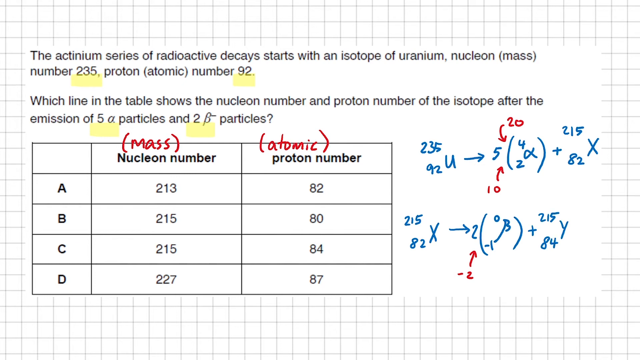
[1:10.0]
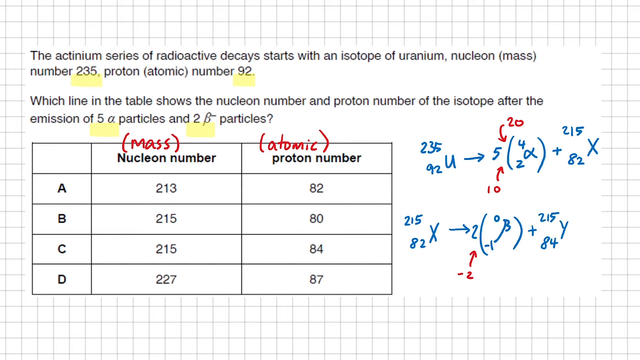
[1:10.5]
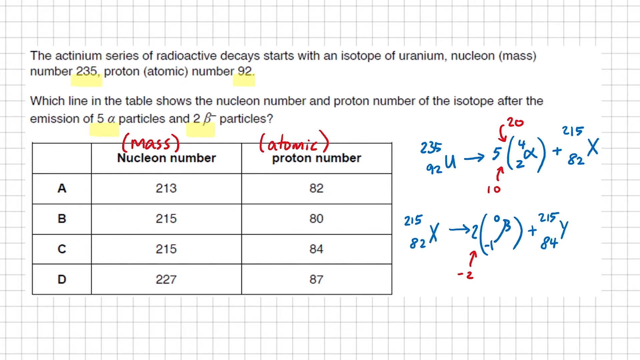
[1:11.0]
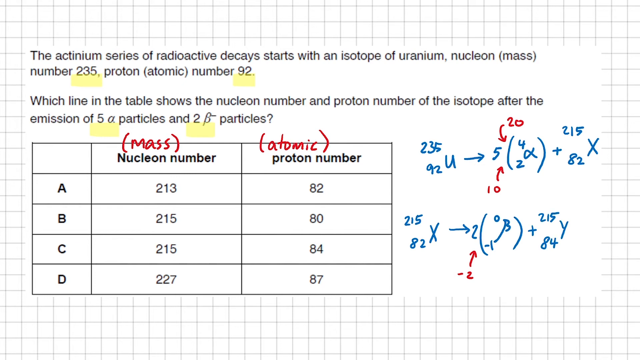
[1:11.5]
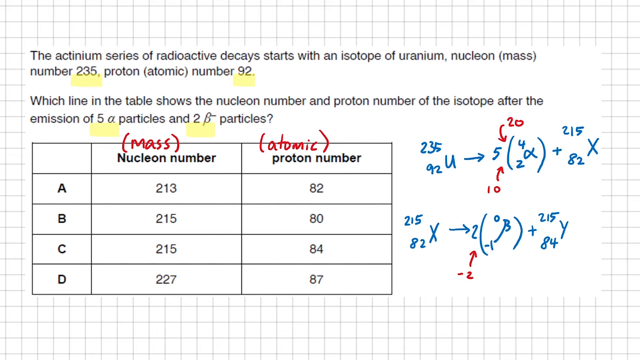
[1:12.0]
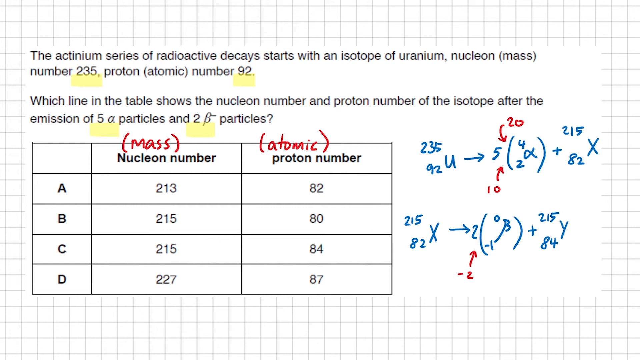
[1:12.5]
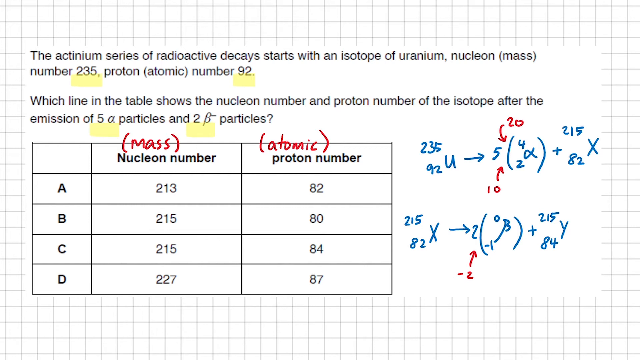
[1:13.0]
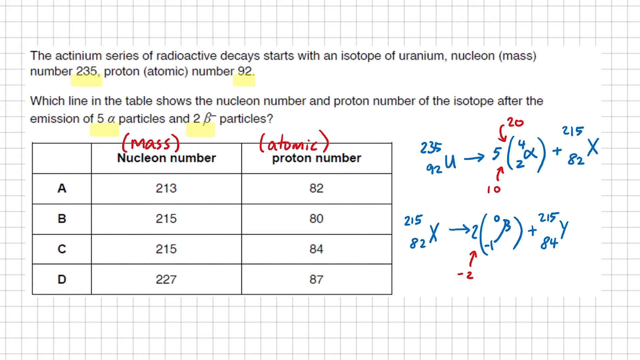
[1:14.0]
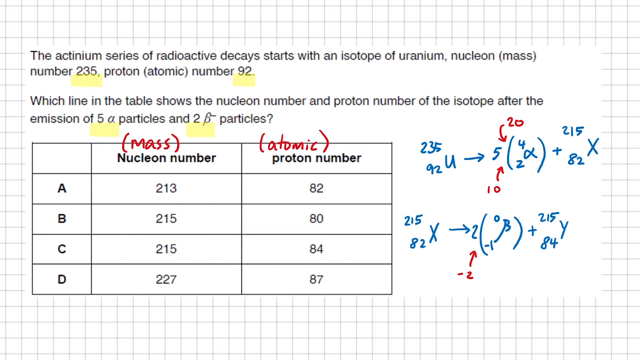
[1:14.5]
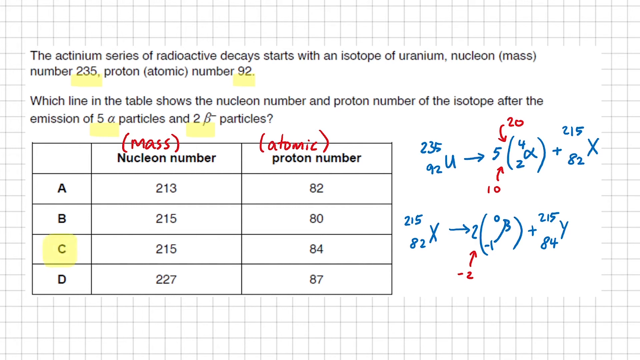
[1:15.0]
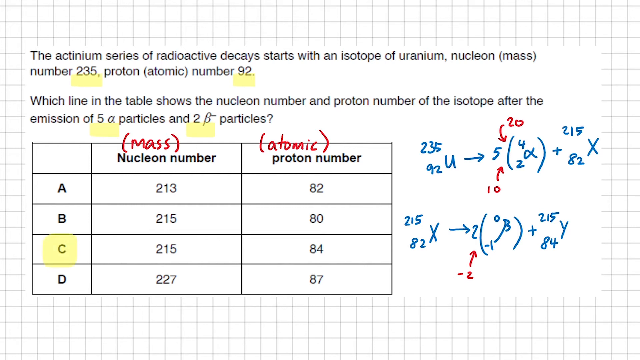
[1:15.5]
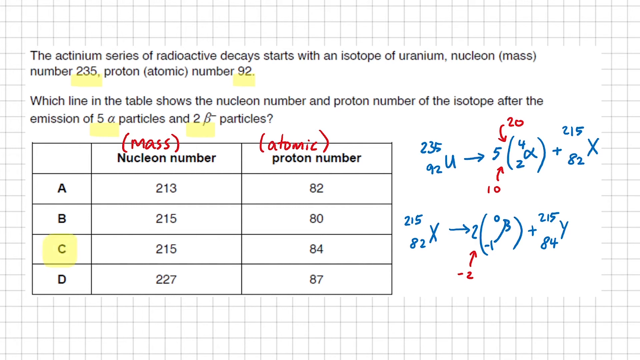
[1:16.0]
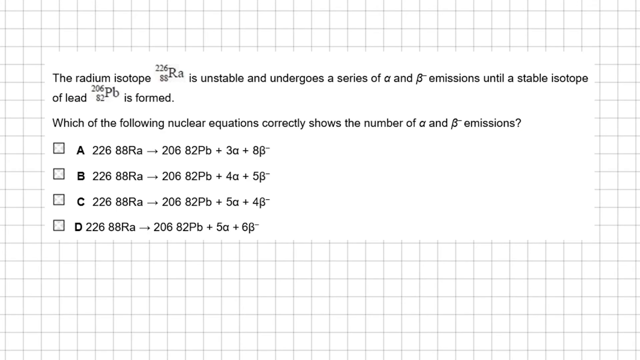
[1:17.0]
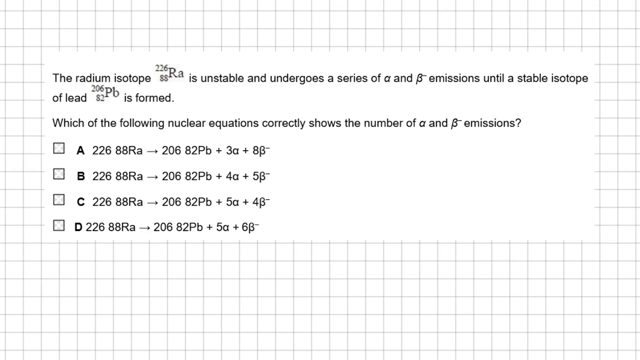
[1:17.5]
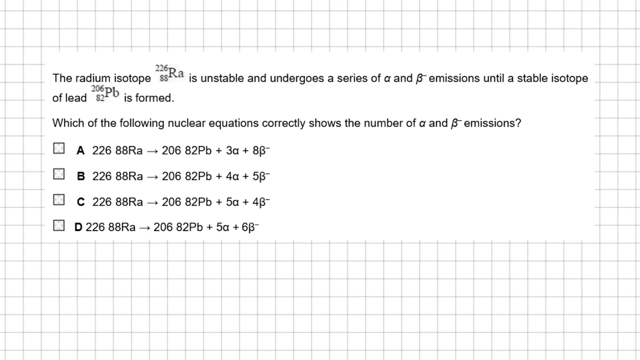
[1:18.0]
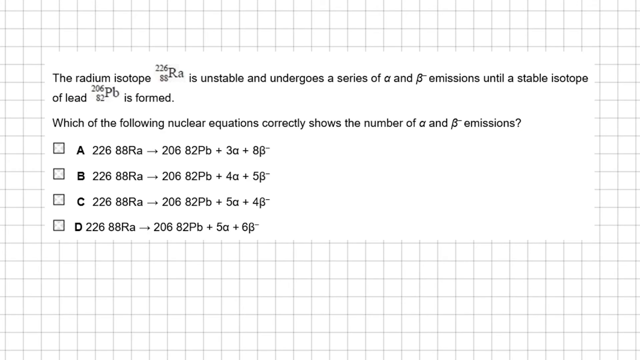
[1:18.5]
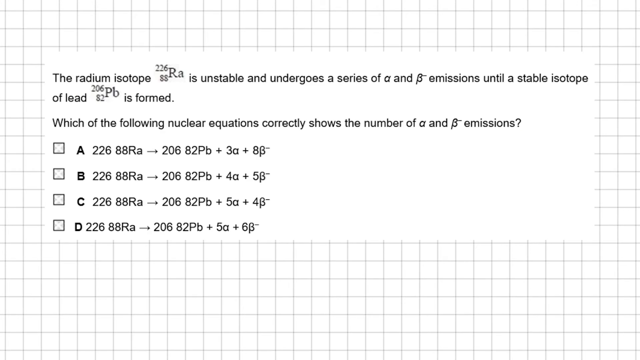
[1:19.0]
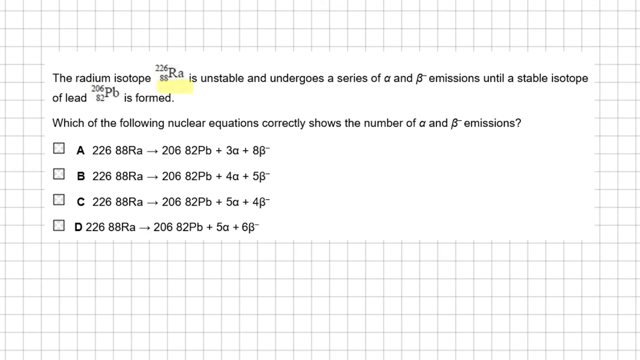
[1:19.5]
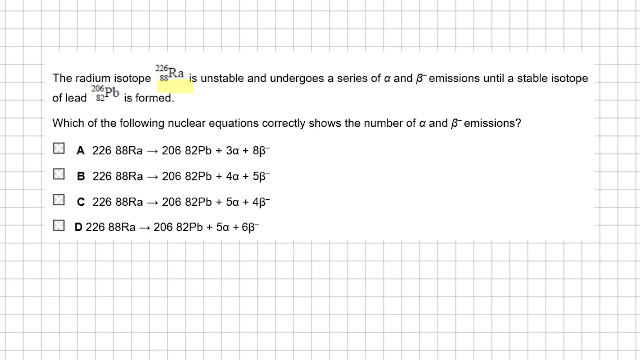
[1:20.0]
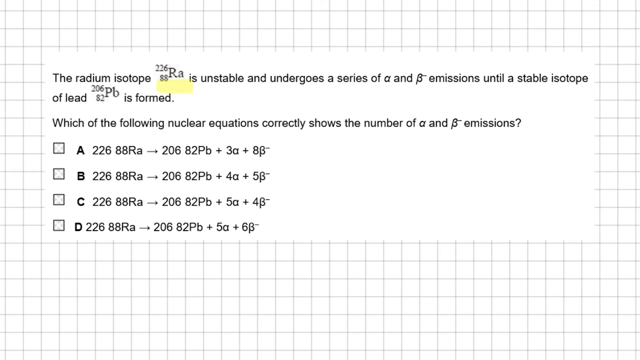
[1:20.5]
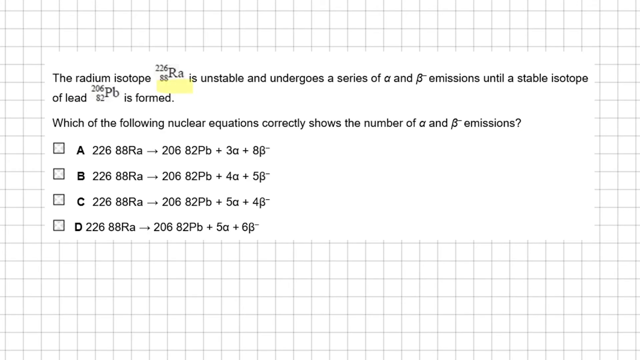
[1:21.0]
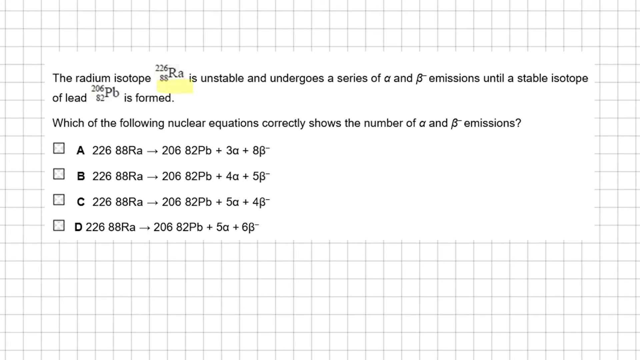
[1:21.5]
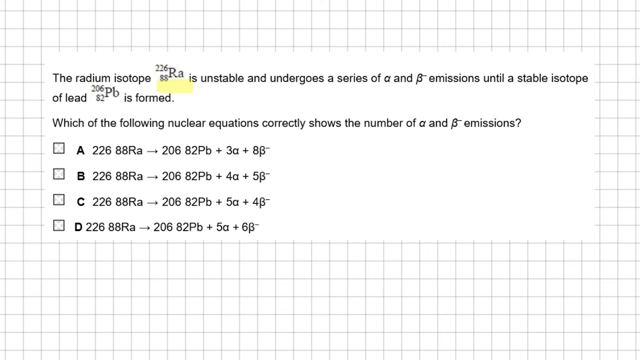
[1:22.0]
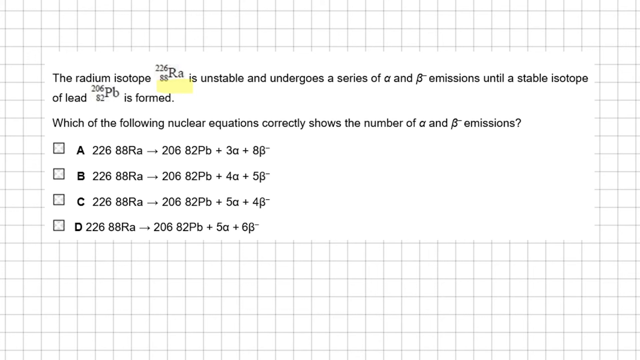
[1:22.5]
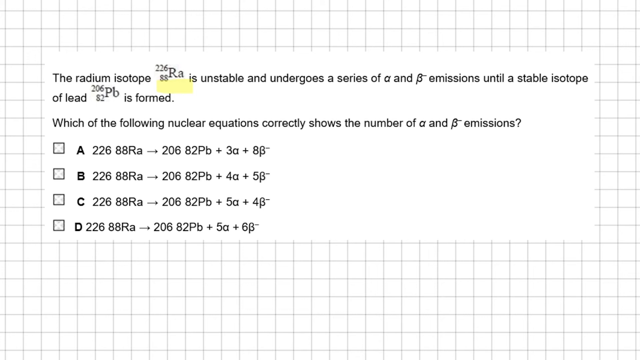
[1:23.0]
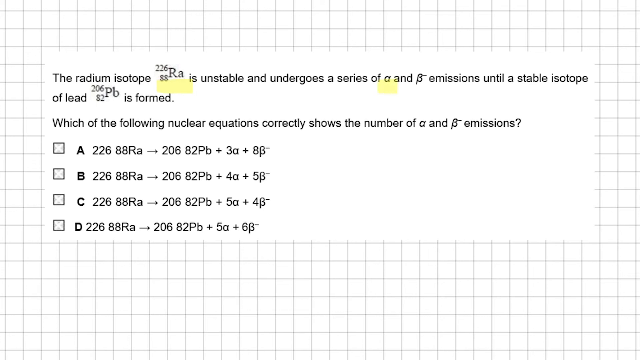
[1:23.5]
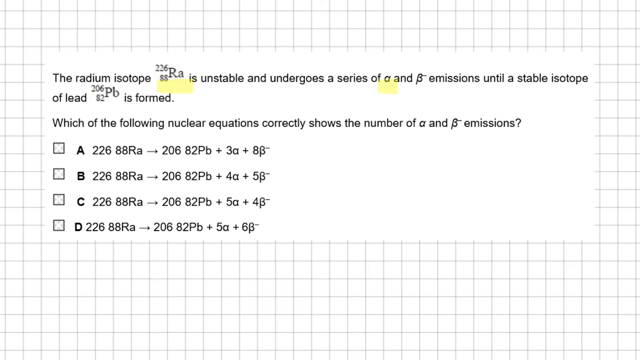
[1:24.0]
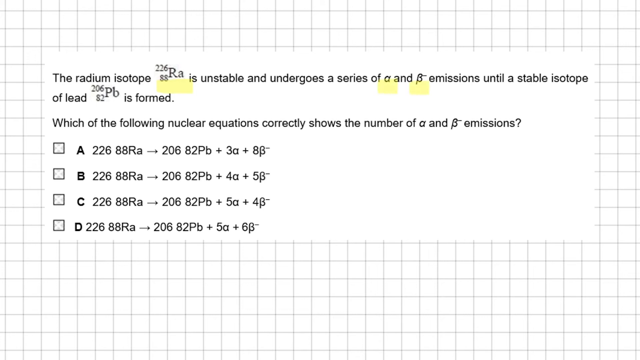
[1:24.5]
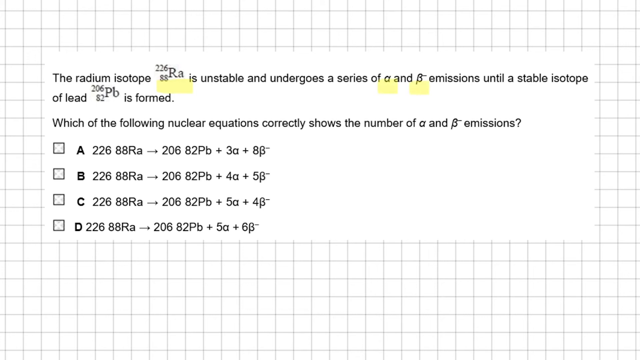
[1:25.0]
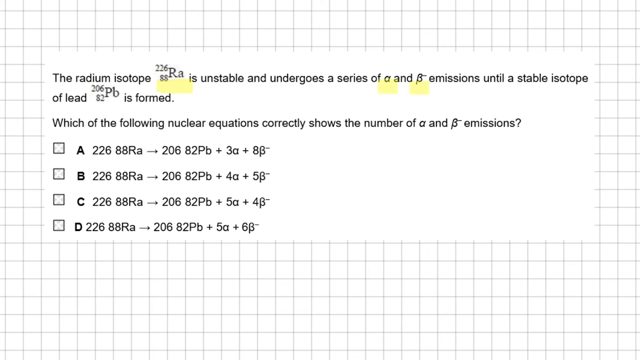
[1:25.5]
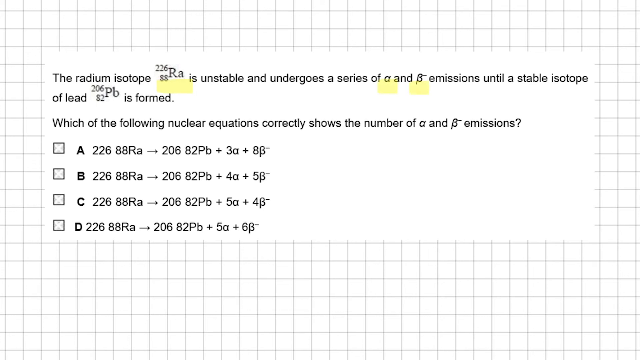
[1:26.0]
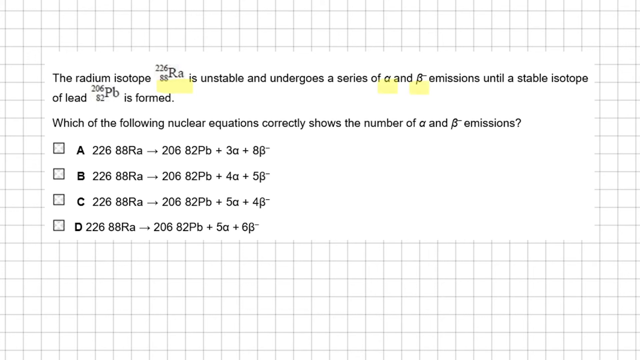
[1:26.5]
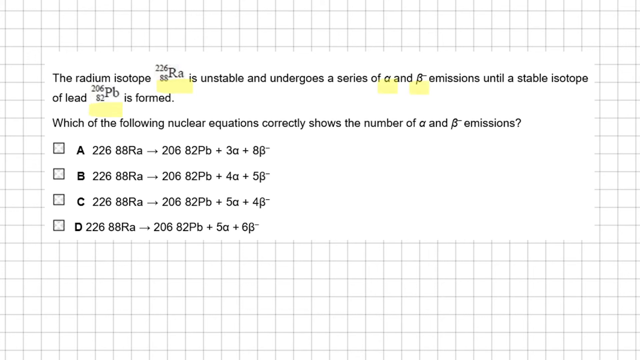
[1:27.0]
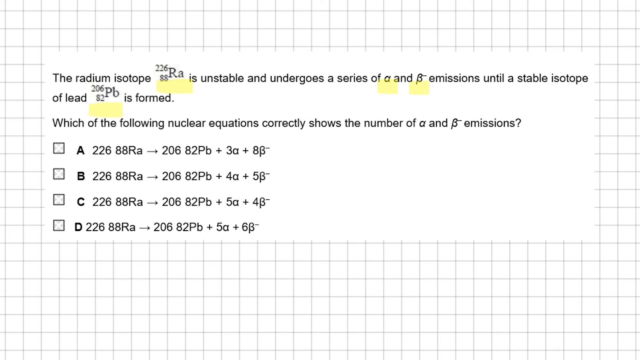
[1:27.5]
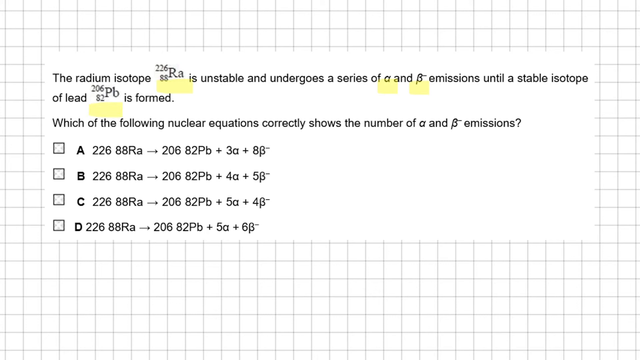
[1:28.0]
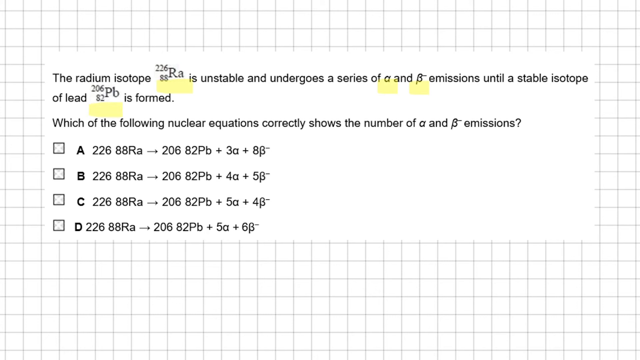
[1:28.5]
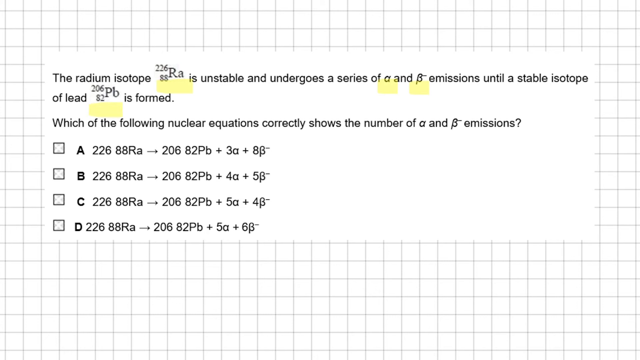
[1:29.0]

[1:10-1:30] Over a black and white grid pattern on a computer screen is a science question about an isotope decay, asking which of four options in a table is correct. Parts of the context and question are underlined, and equations and clarifications are written in red and blue marker. The page then changes: the grid pattern remains, but the question is entirely new. It is about an unstable radium isotope and asks which of the following nuclear equations correctly shows the emissions, with four options, each with a checkbox beside it. Four separate parts of the question are underlined with a yellow highlighter. These marks appear on screen suddenly and are made on the computer itself rather than by hand.